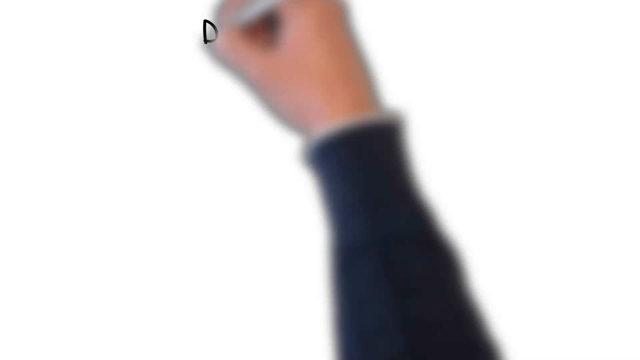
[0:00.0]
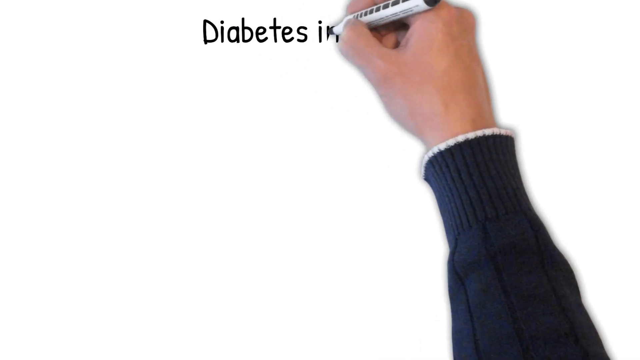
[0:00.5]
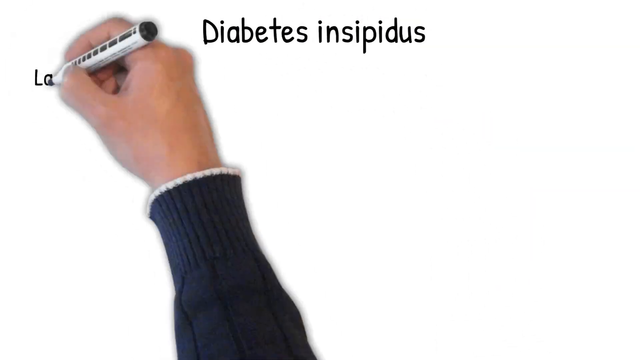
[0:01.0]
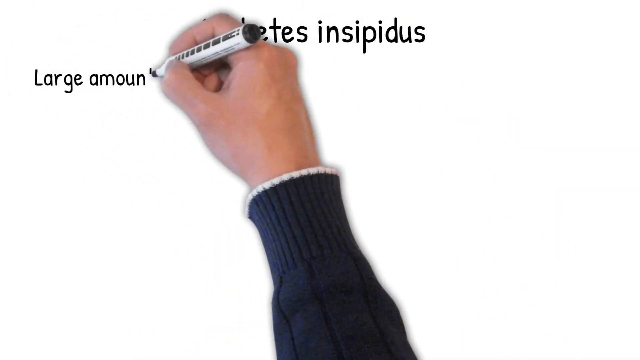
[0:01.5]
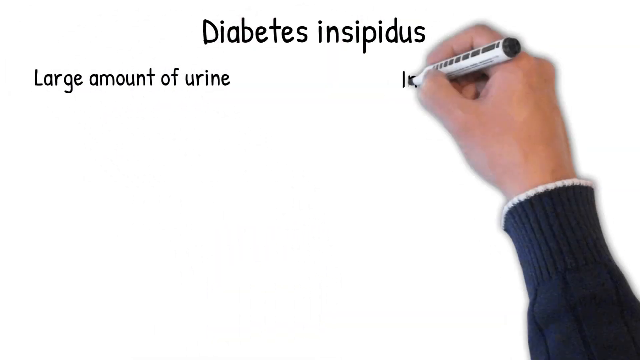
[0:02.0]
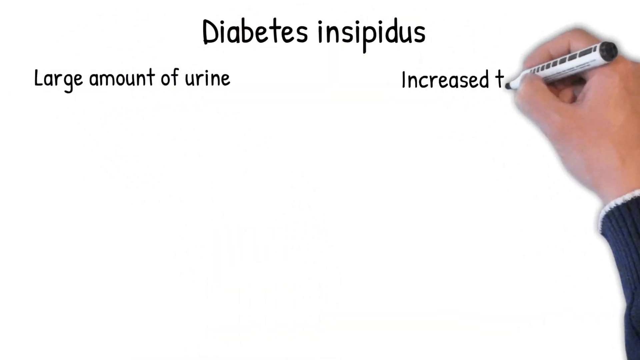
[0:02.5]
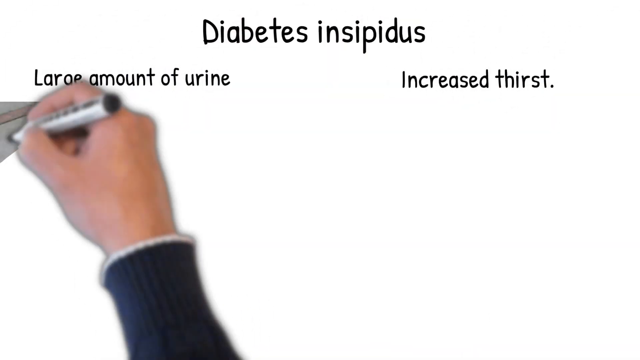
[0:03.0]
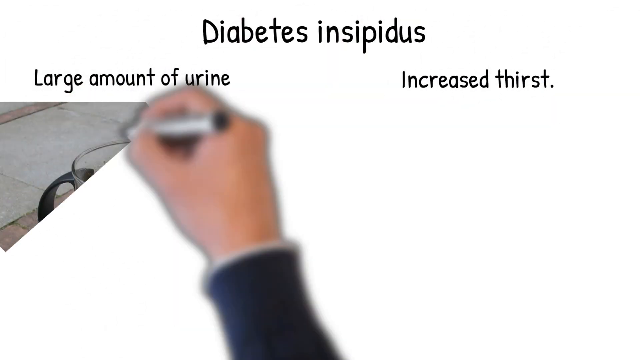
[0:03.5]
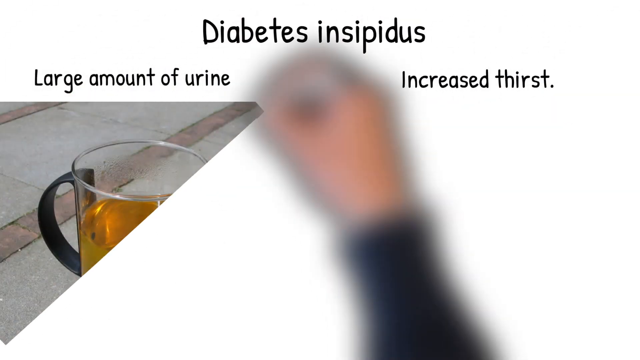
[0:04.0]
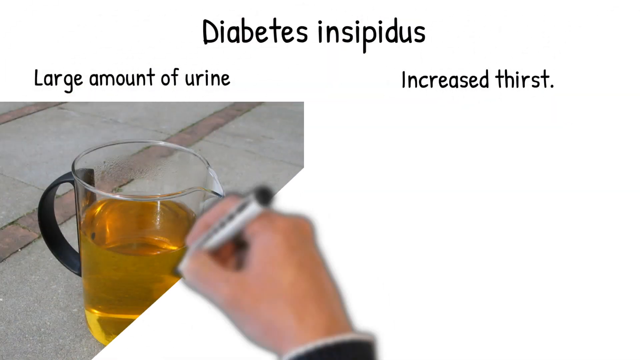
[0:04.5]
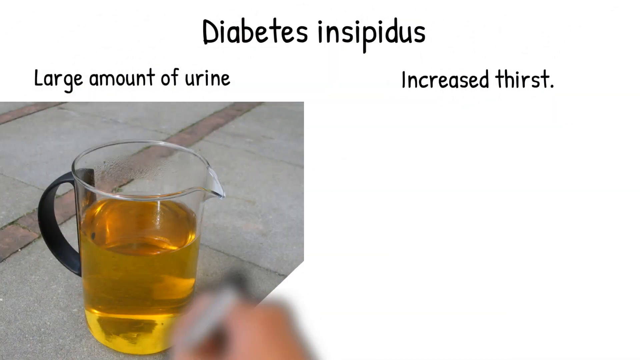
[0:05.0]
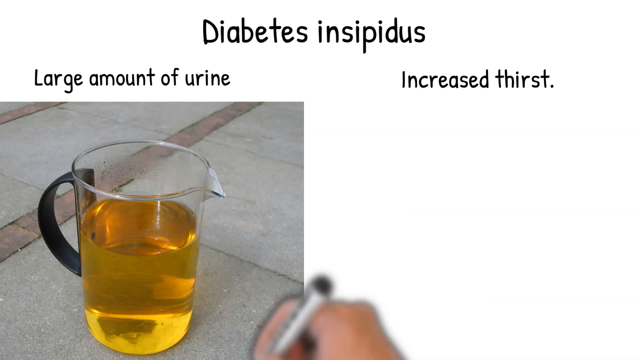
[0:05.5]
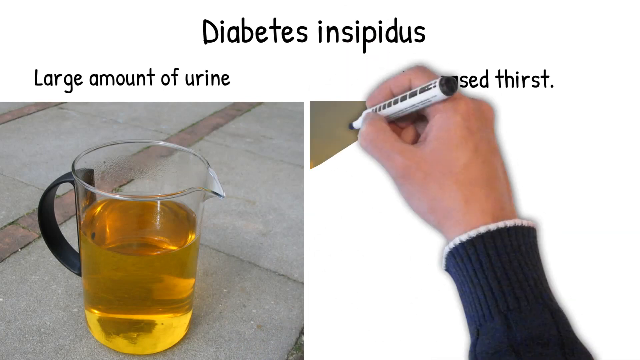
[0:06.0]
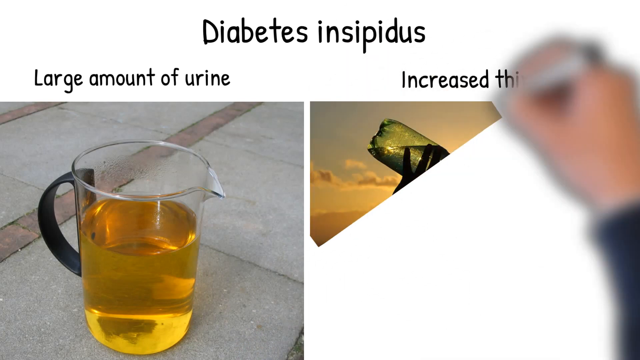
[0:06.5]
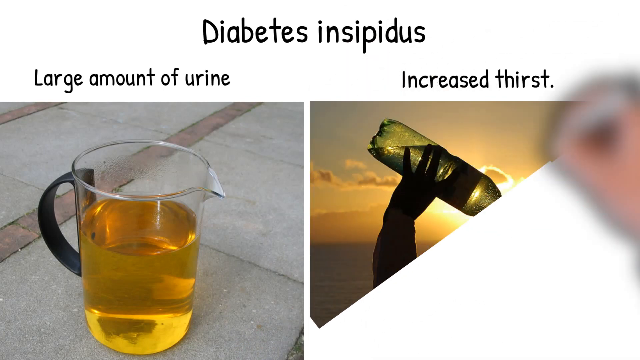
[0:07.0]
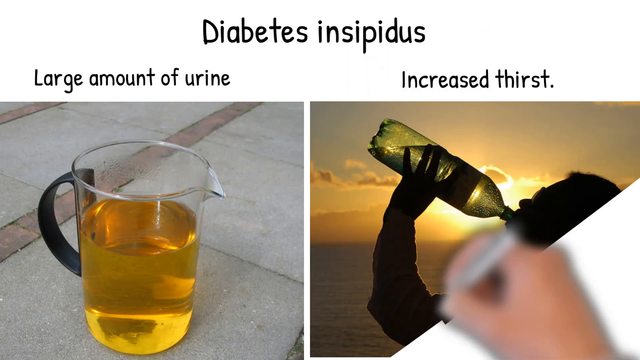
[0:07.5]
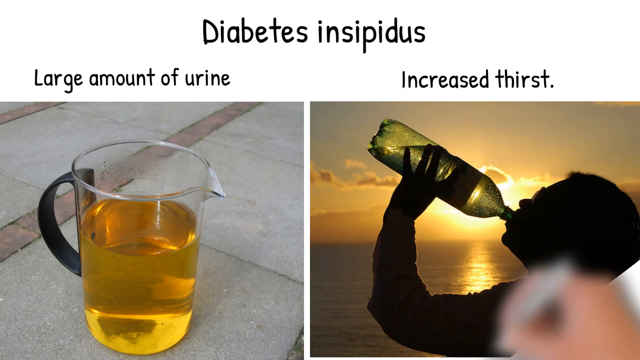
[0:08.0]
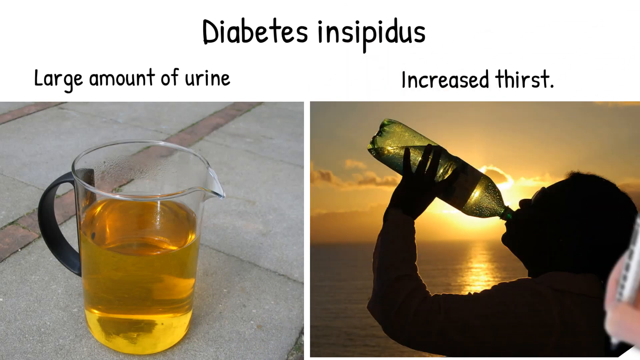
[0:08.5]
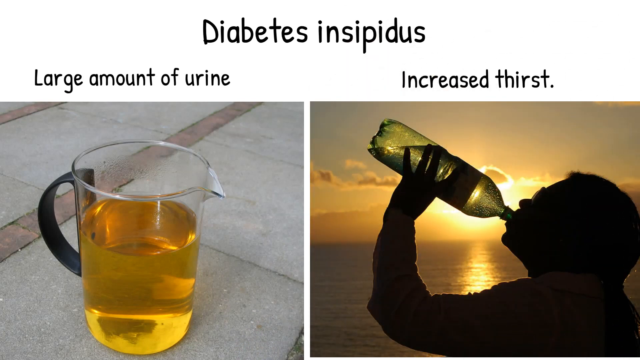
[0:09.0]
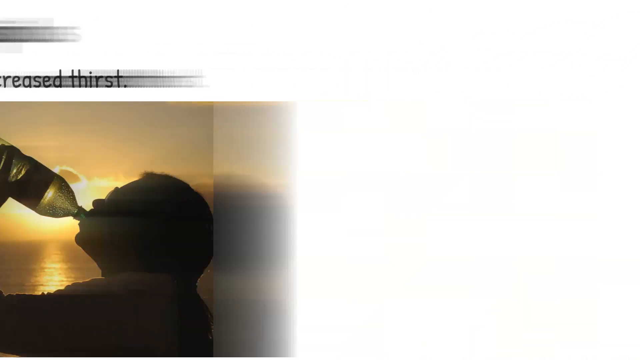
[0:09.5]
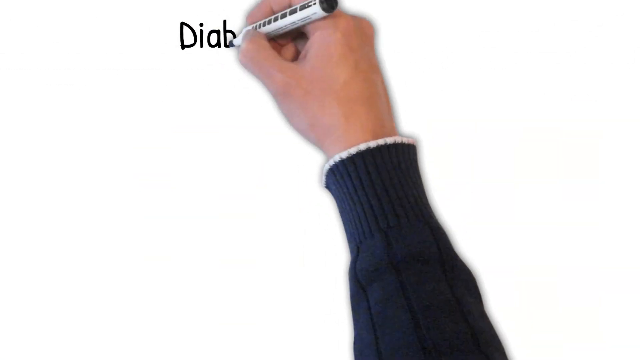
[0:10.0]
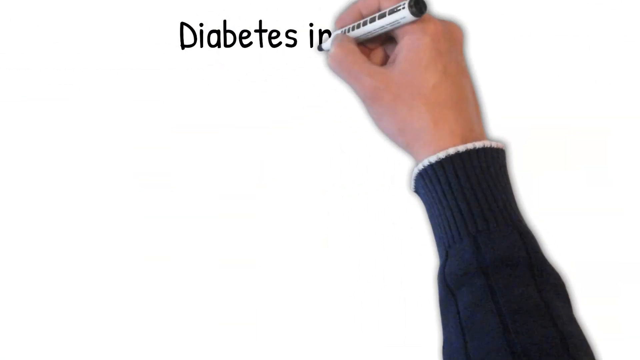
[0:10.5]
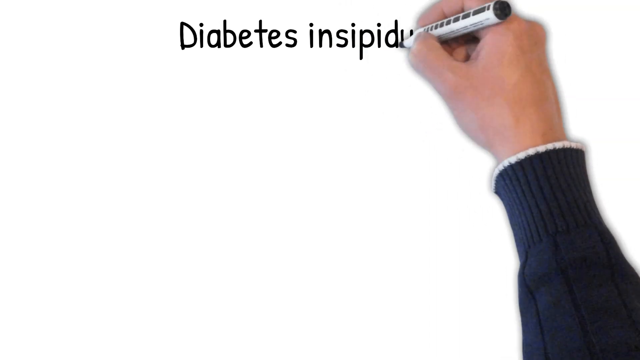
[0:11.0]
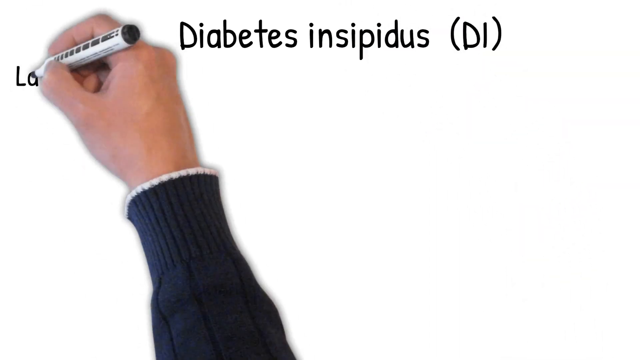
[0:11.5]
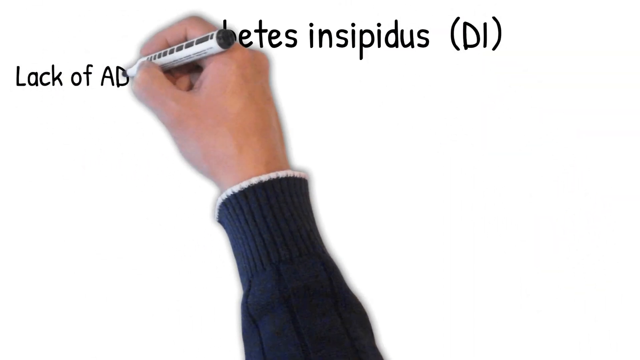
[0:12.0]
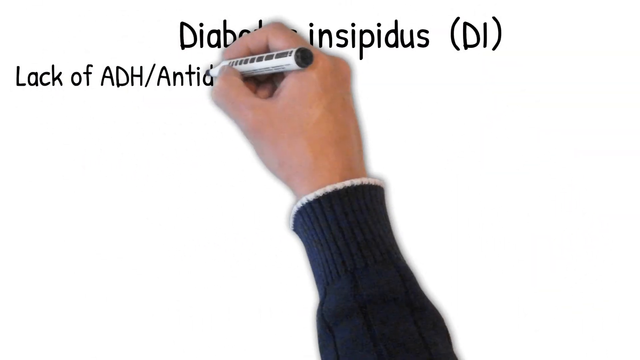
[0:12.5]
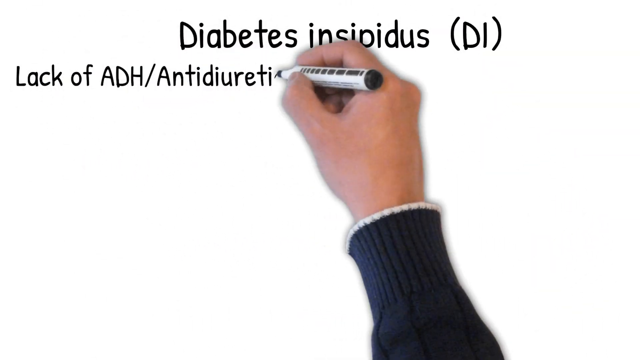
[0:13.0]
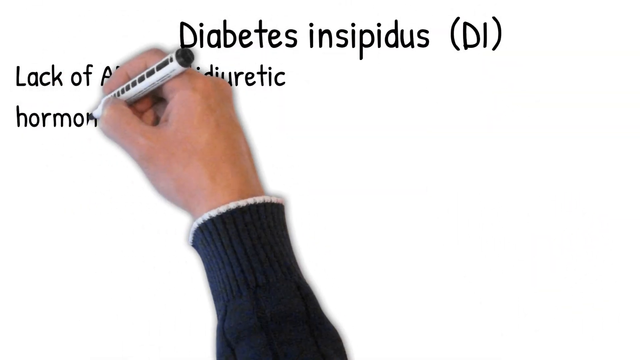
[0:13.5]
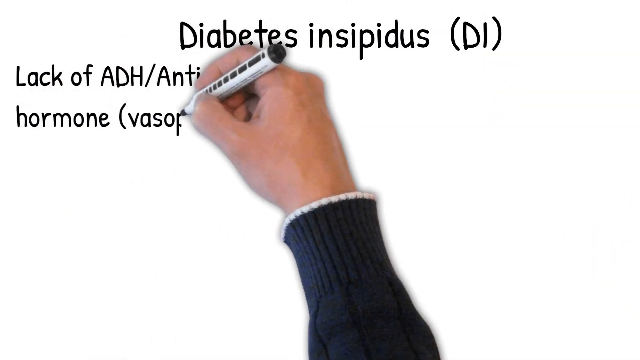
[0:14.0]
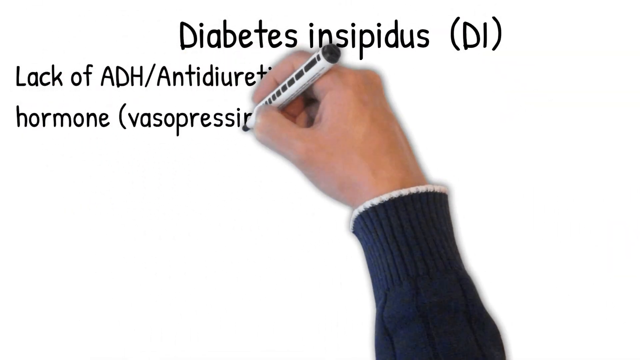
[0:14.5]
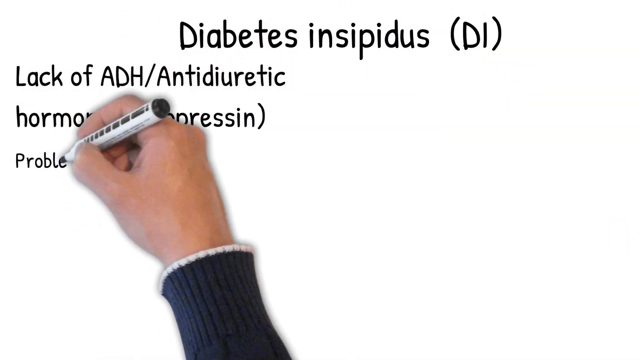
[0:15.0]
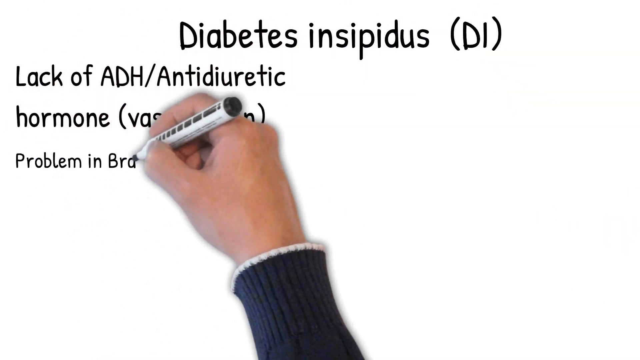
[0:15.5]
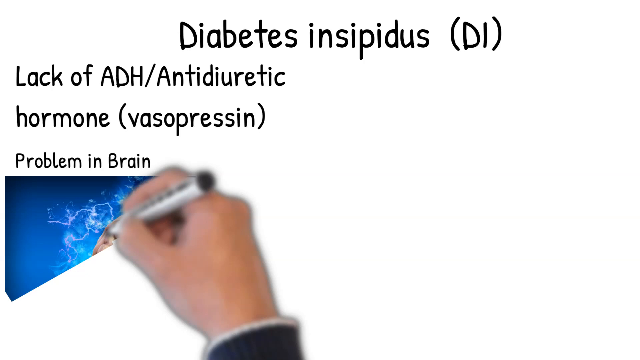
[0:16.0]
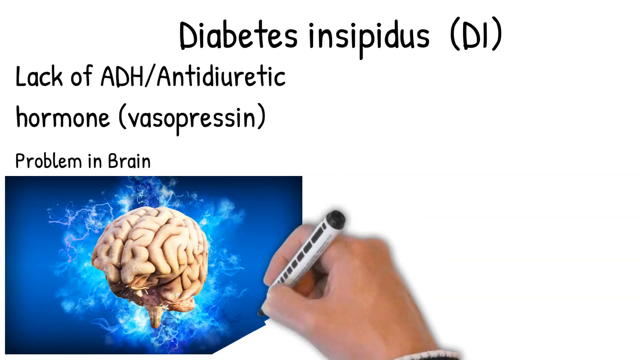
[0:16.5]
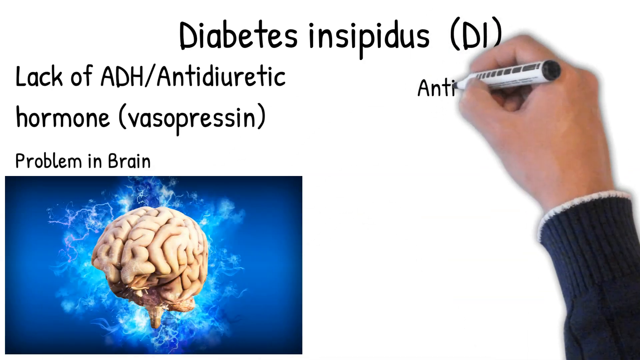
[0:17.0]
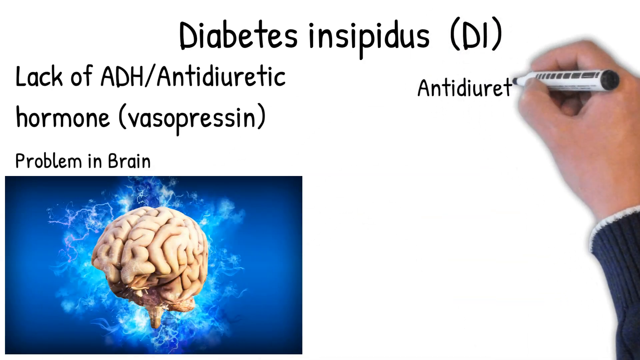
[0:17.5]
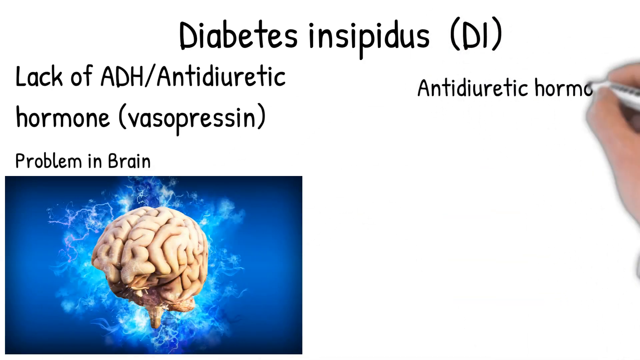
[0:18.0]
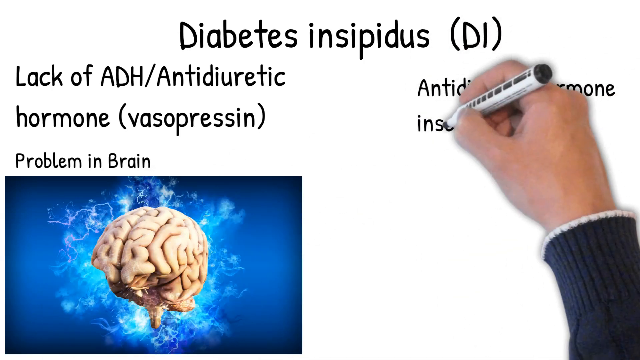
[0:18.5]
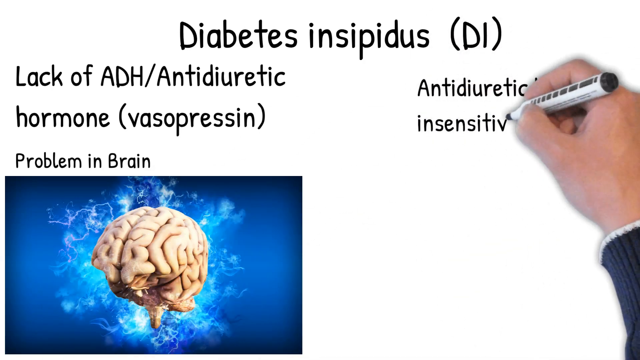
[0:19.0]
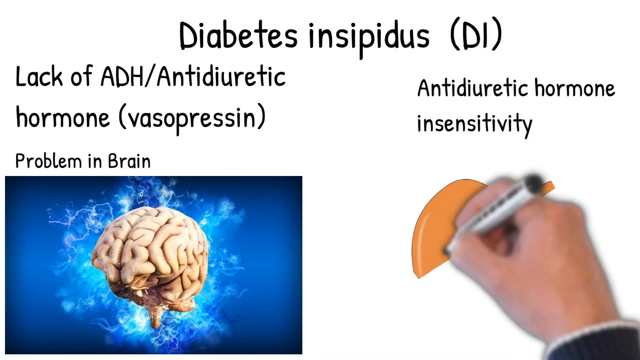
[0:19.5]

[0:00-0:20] An illustrated hand appears to be writing and drawing different artwork, moving very fast. At the top, the text reads "diabetes insipidus." The hand draws a large container with urine in it, with "large amount of urine" written above it. Next to that is "increased thirst" with an image of a man drinking water in front of a beach. The next slide is titled "diabetes insipidus," and he begins drawing different symptoms. The first reads "lack of ADH / anti-diuretic," followed by "hormone" and, in parentheses, "vasopressin." He then draws a picture of a brain superimposed over a blue background, with "problem in brain" written above it. On the right-hand side he begins writing "anti-diuretic hormone insensitivity."